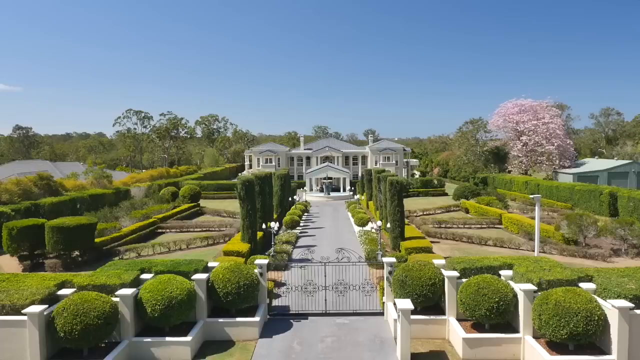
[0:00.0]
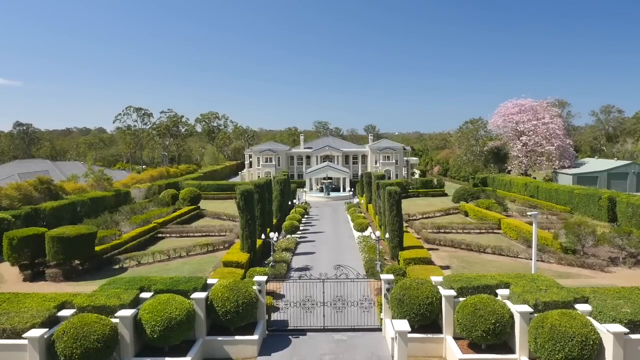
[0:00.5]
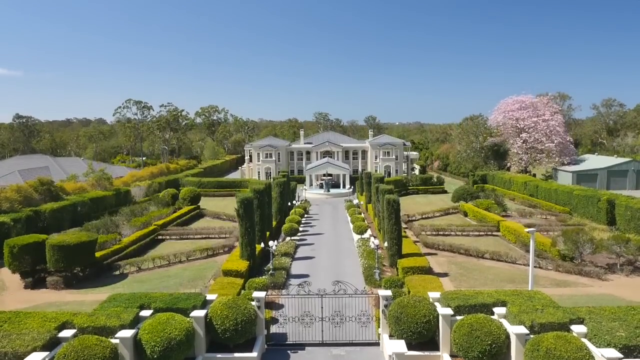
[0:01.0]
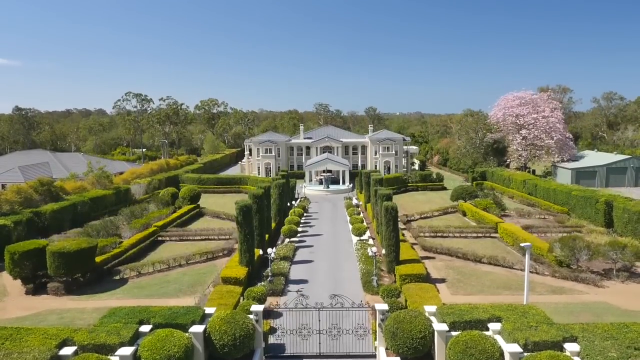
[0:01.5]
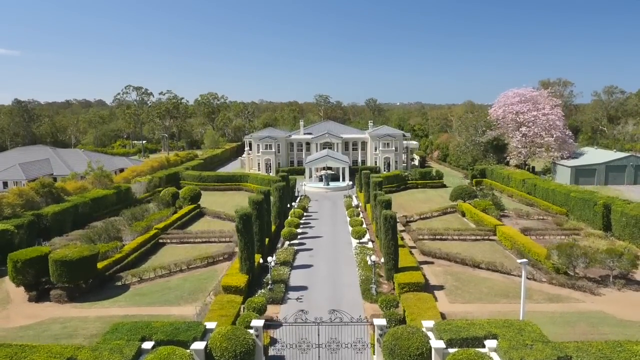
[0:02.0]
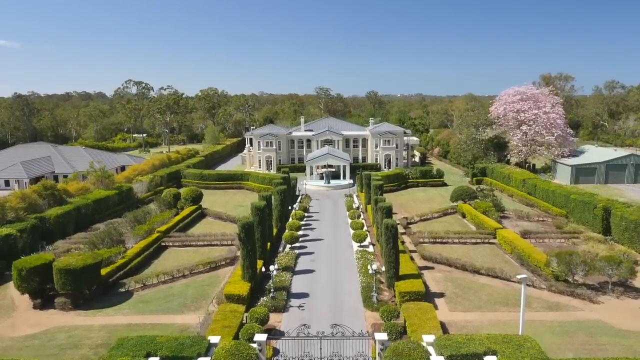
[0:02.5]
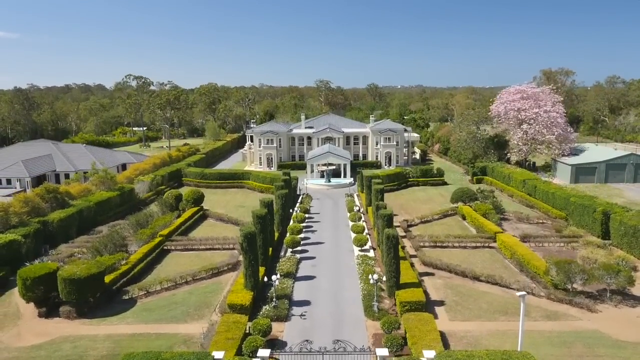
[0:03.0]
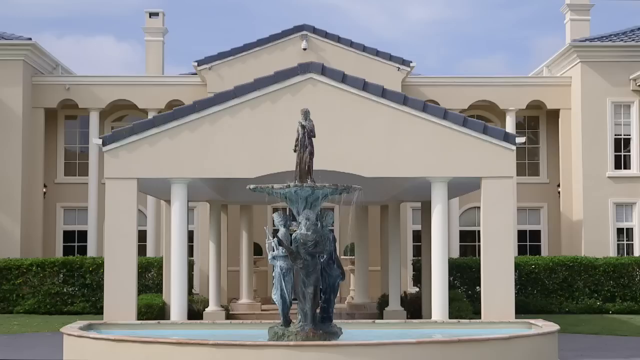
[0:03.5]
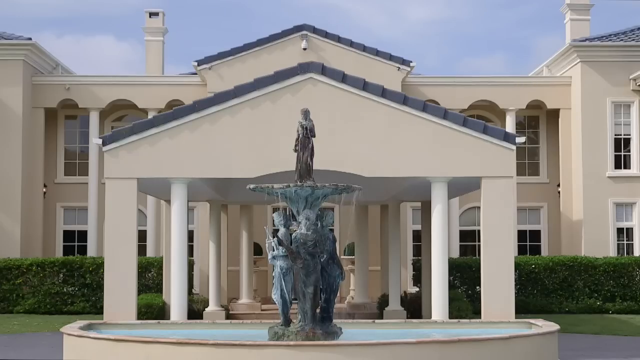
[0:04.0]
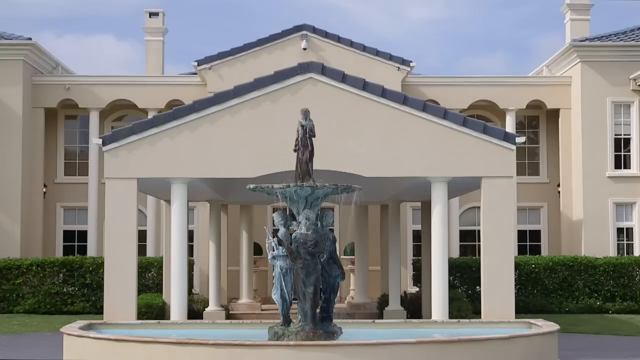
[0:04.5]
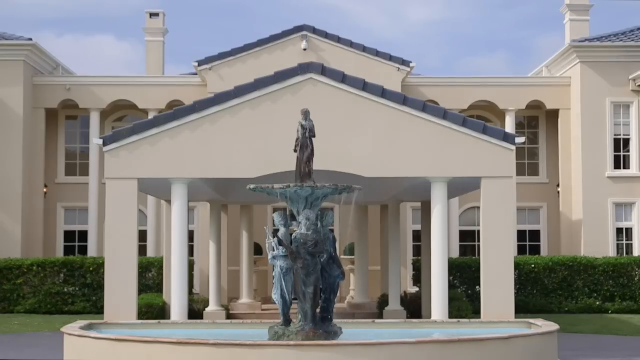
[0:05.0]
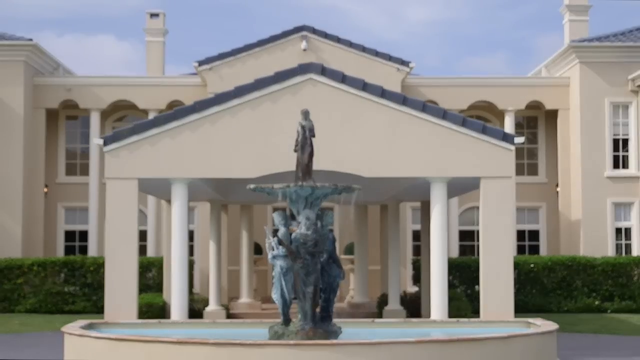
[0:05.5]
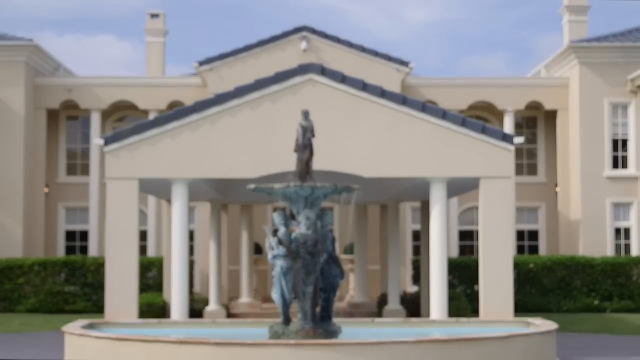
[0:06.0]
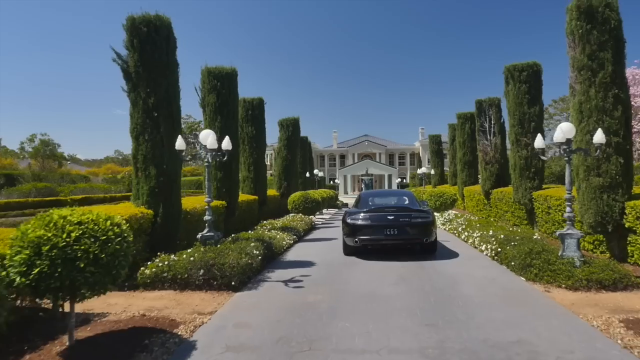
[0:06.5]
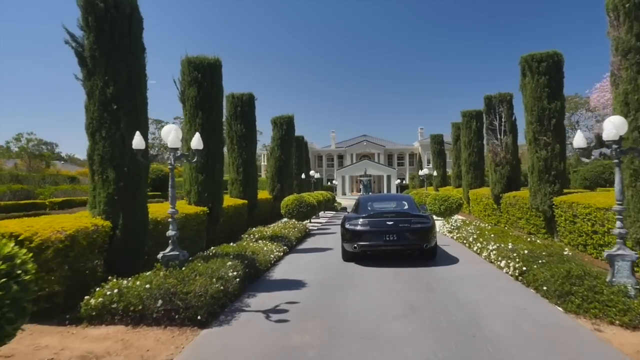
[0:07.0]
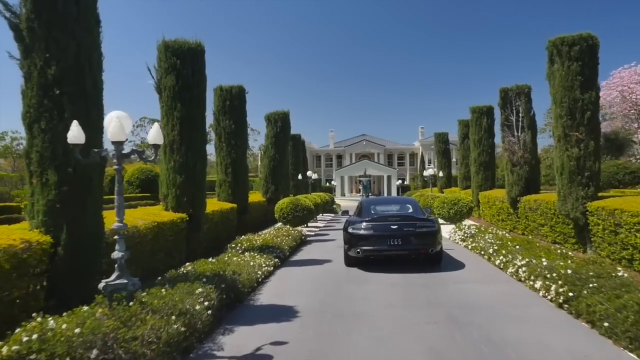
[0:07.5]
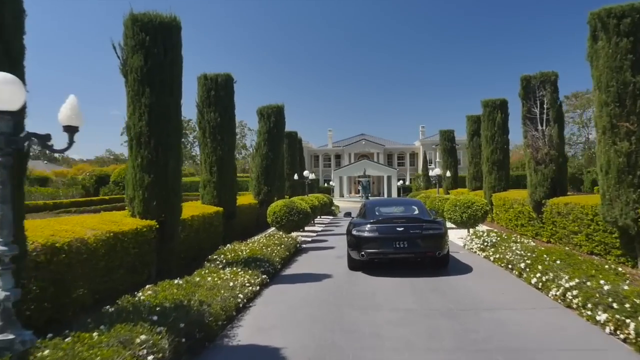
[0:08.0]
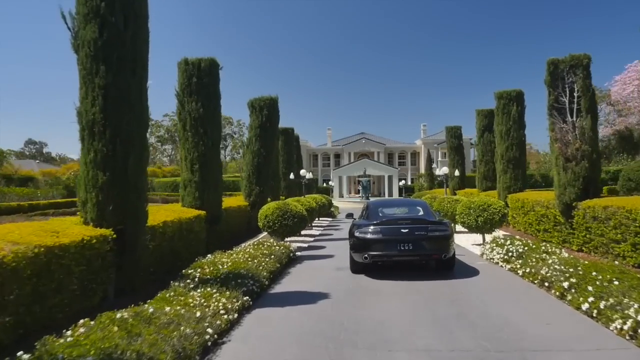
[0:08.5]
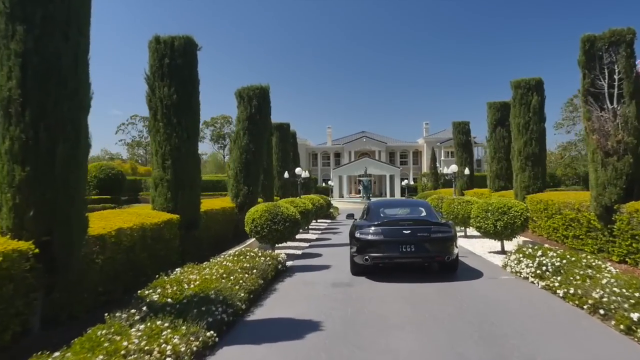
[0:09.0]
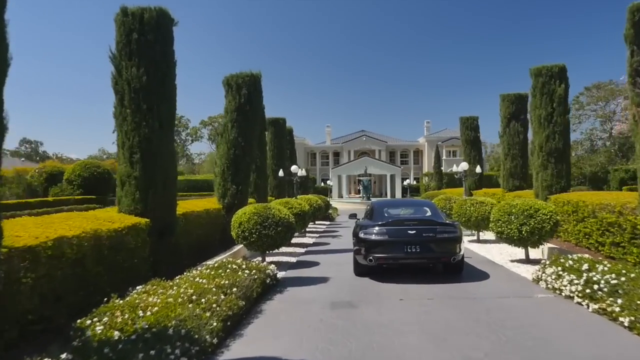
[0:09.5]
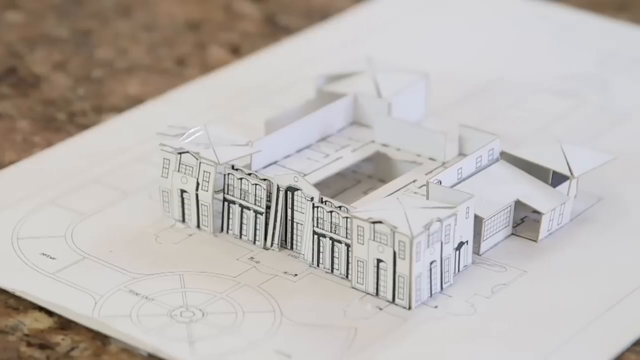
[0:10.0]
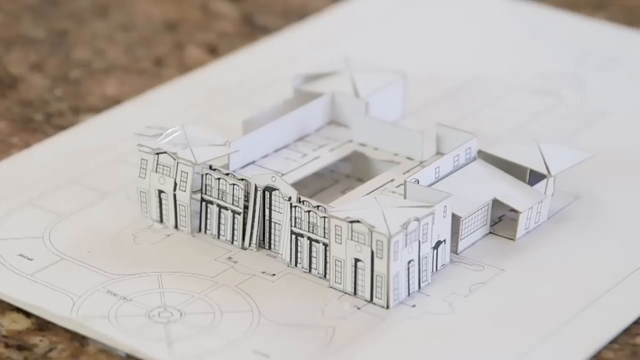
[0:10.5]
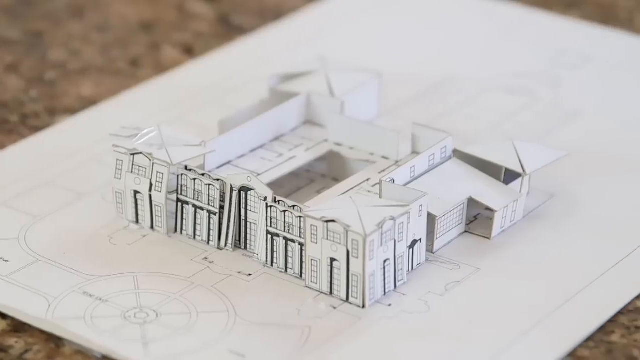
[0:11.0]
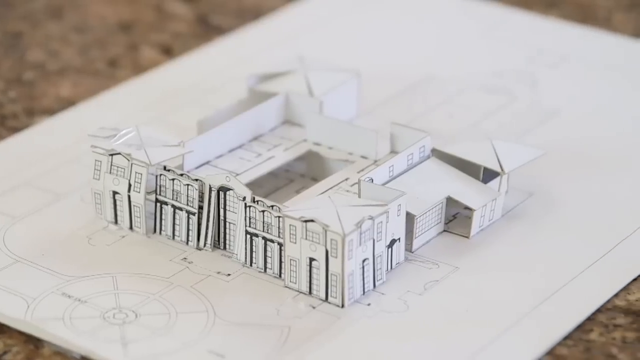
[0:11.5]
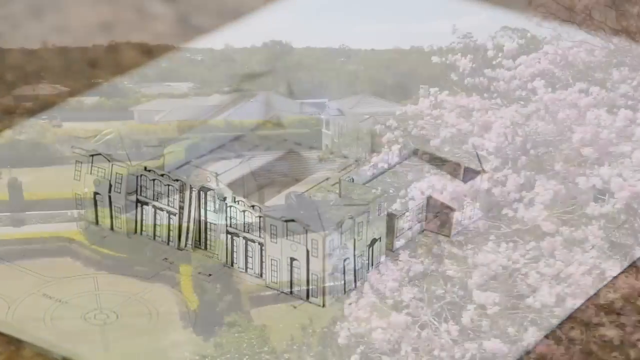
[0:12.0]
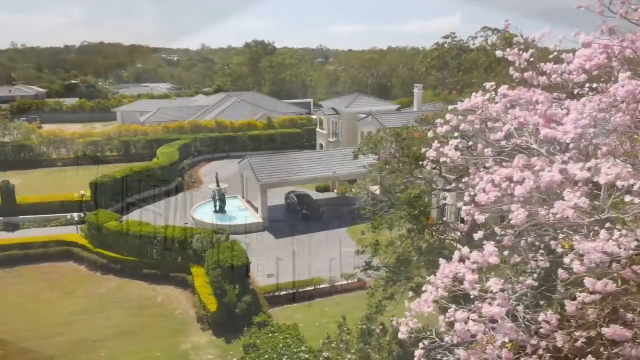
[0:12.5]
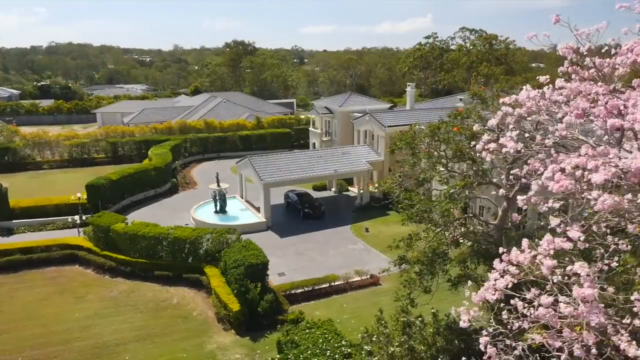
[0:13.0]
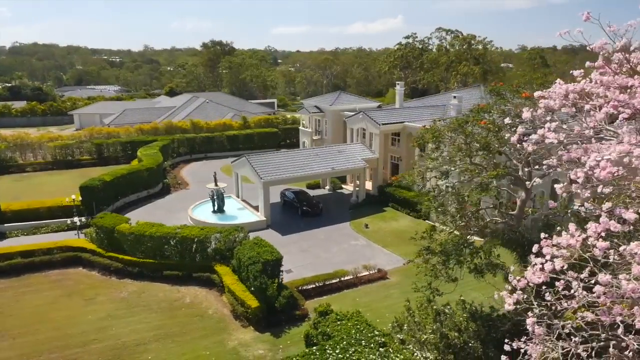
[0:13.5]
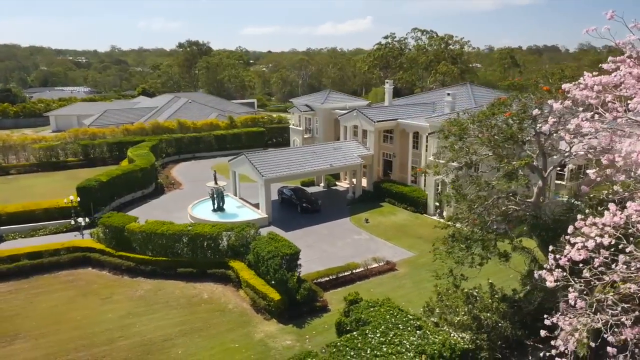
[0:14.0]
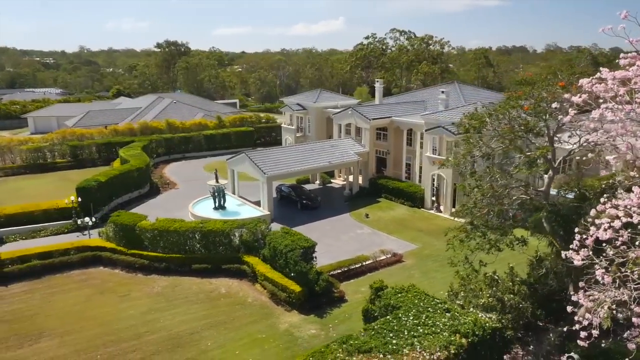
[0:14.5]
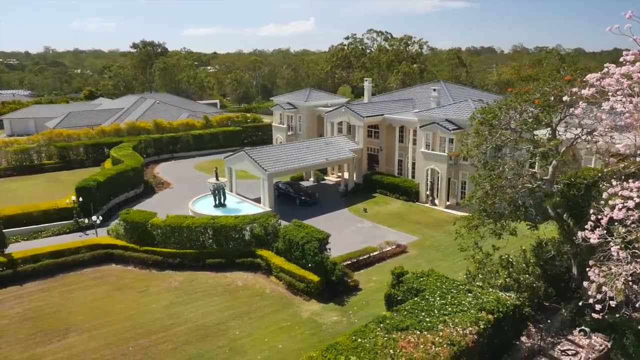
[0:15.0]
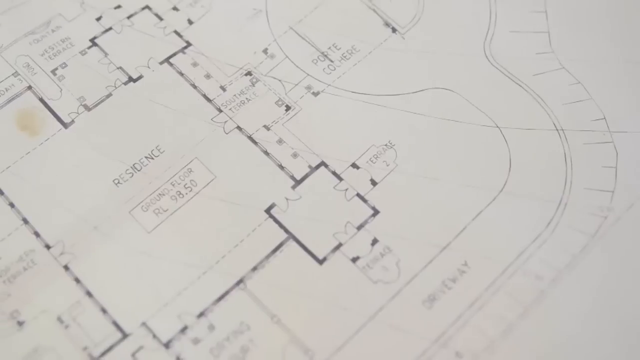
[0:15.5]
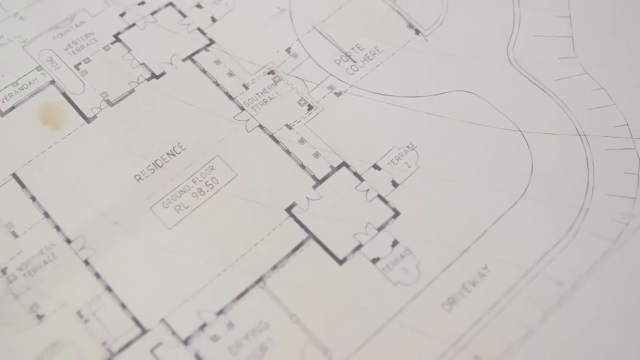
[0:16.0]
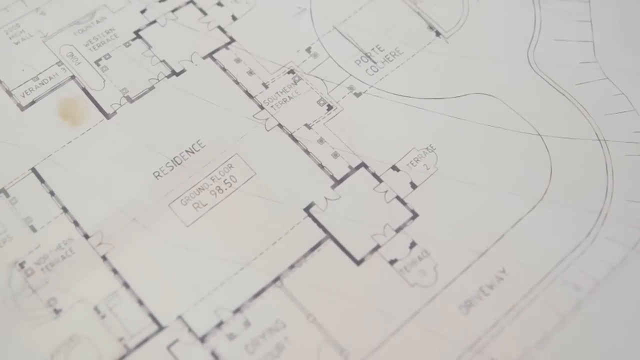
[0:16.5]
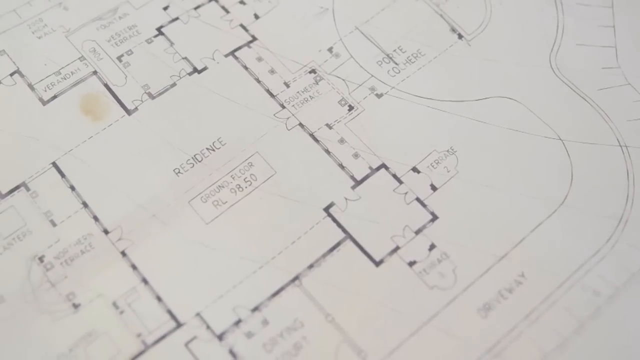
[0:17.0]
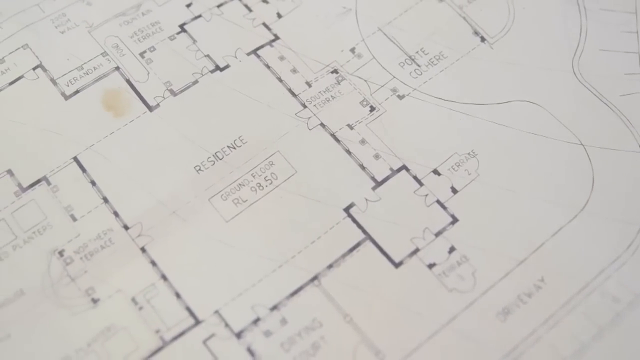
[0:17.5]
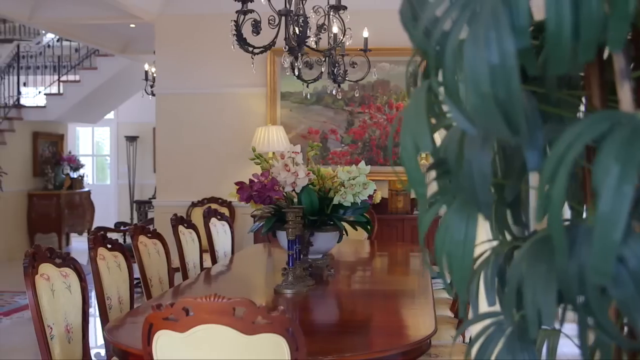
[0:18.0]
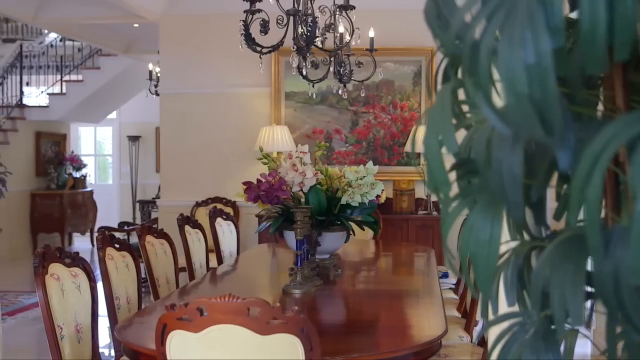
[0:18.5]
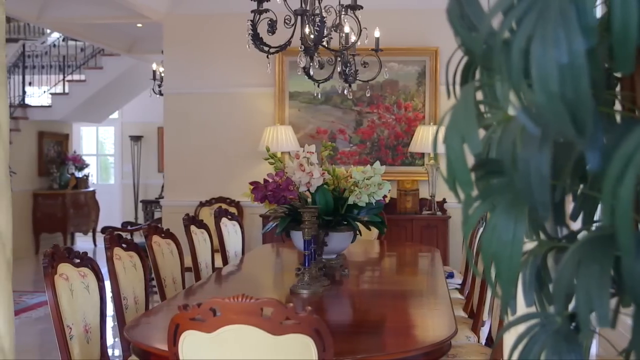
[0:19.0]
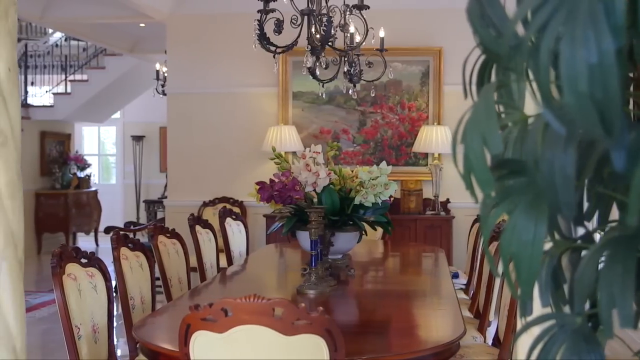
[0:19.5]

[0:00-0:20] A road leads towards a house built like a mansion. Alongside the road is a huge garden with green, trimmed plants, cut into different square-like boxes, lining the sides of the road up to the gate of the house. The house and its garden are viewed from an elevated angle, then a closer view shows the mansion: white, with two floors. At the front of the house is a decorative pond with a statue on top of the structure. Next, a paper on a table shows a sketch or drawing of the house. Inside the house there is a wooden table with a mirror and a lot of chairs, about 10 in number. The interior is huge, white, and has a lot of decorations.